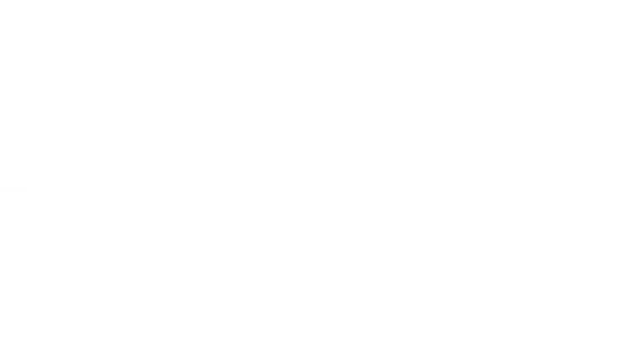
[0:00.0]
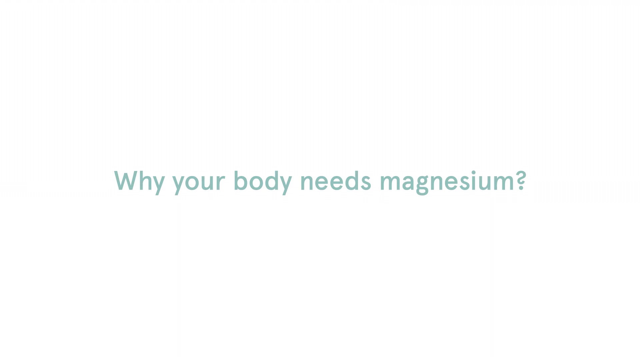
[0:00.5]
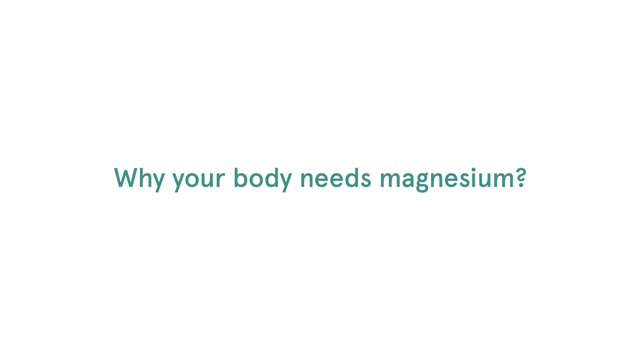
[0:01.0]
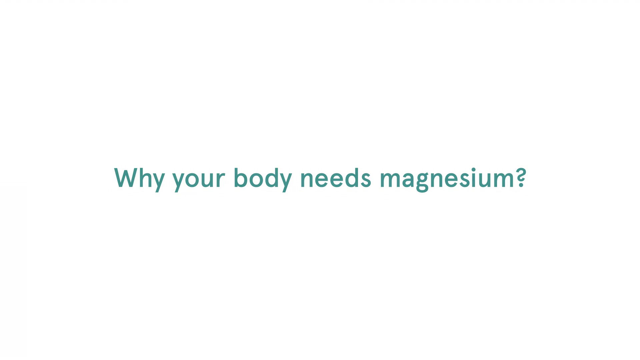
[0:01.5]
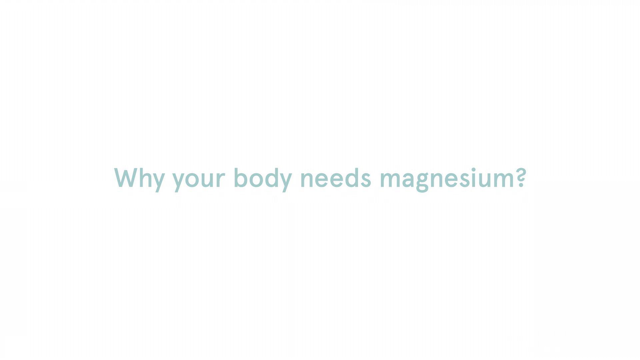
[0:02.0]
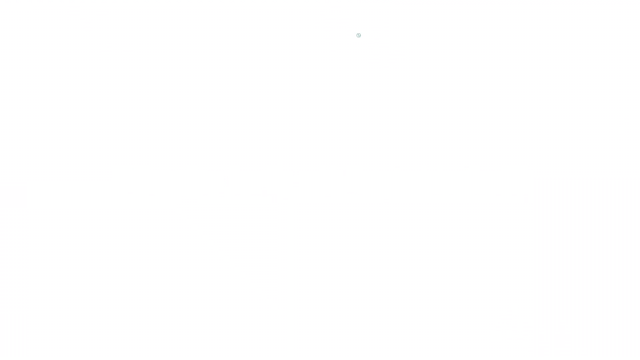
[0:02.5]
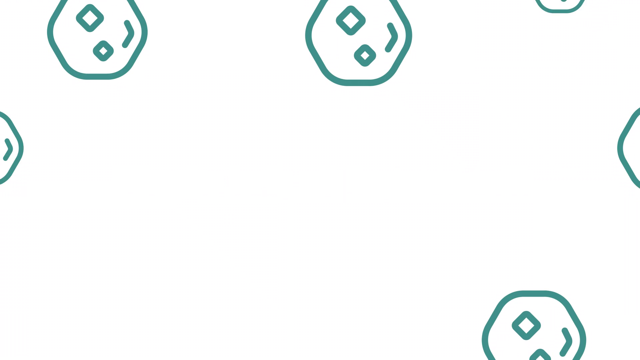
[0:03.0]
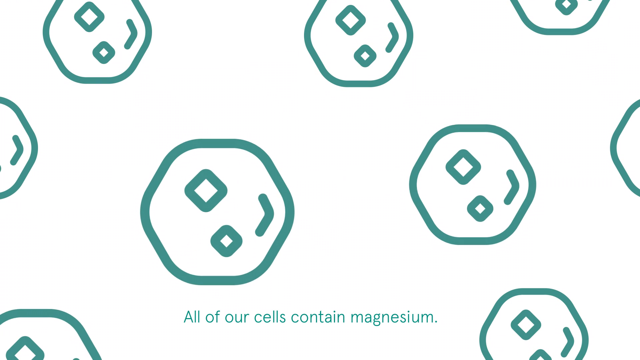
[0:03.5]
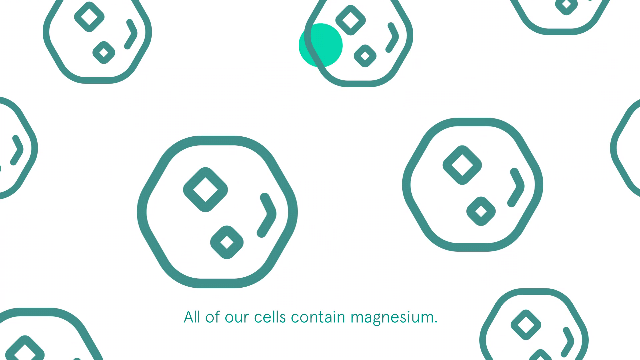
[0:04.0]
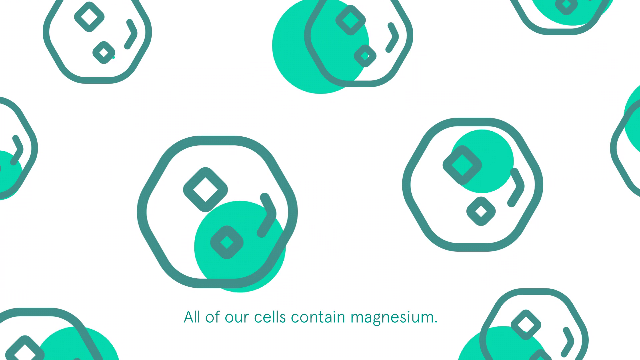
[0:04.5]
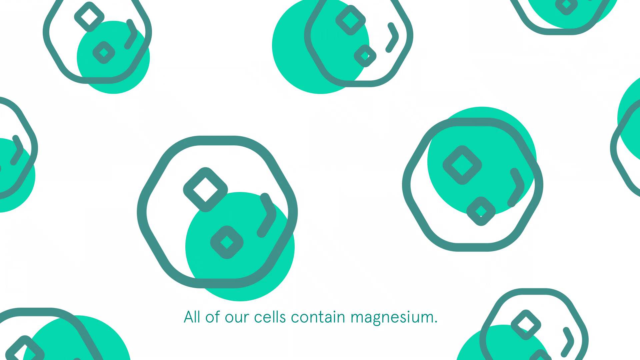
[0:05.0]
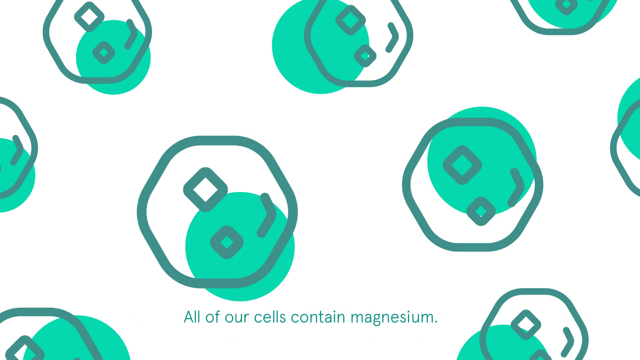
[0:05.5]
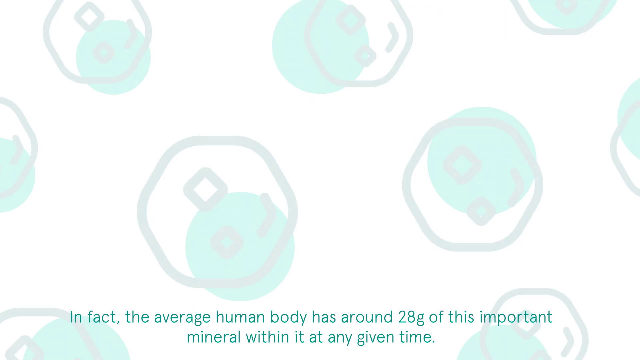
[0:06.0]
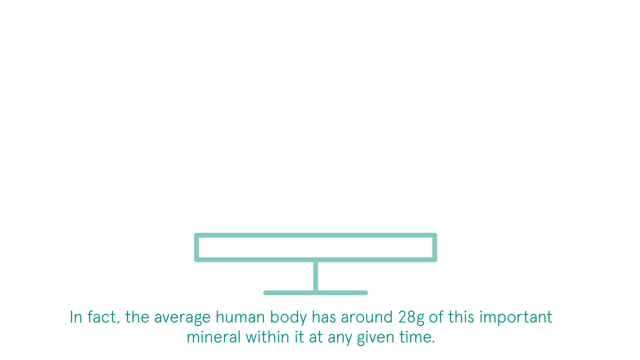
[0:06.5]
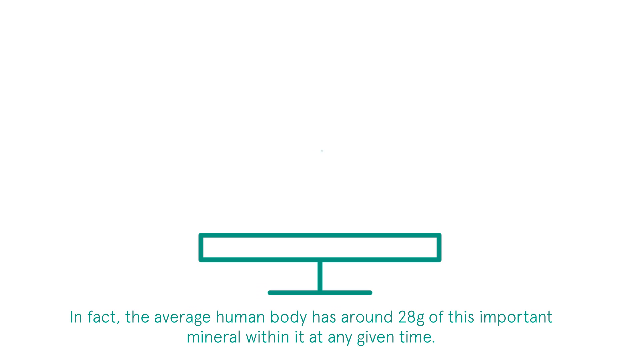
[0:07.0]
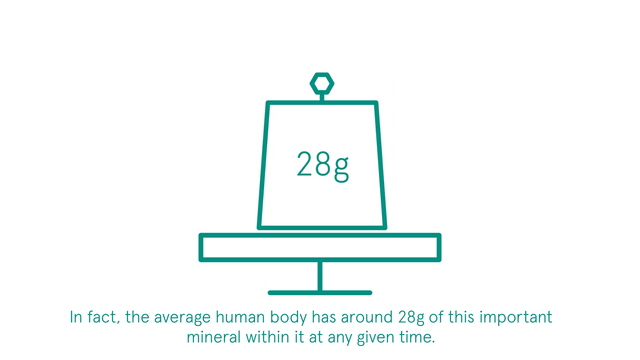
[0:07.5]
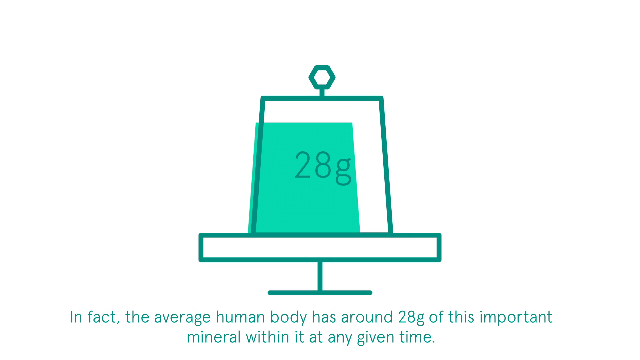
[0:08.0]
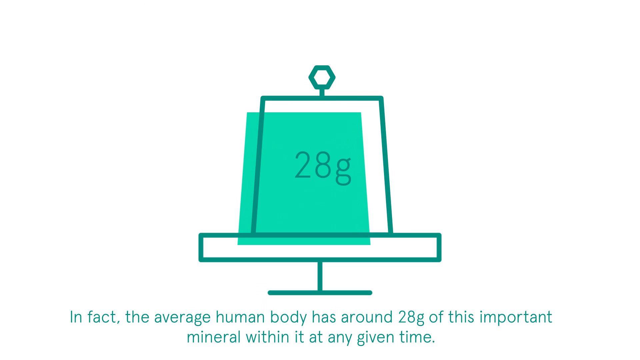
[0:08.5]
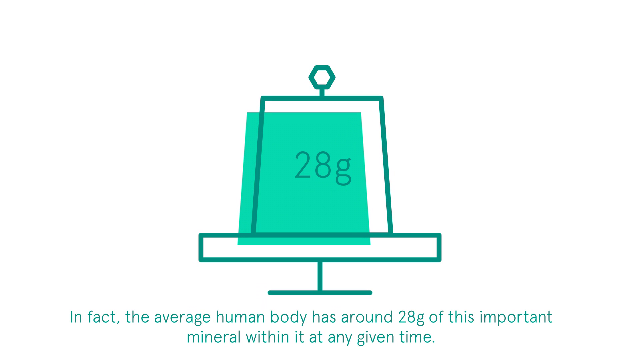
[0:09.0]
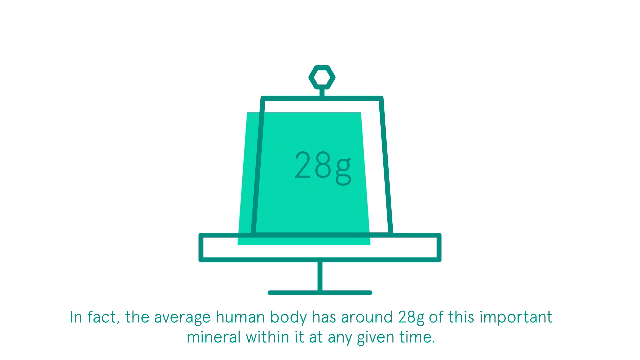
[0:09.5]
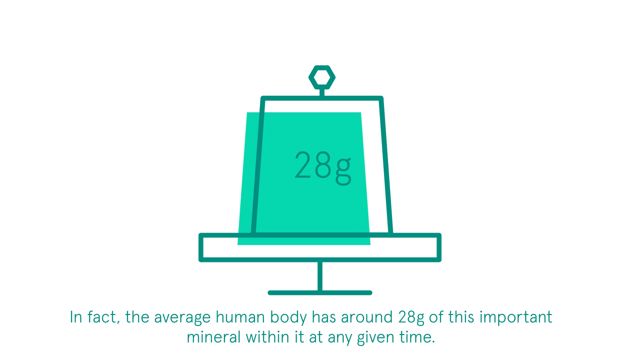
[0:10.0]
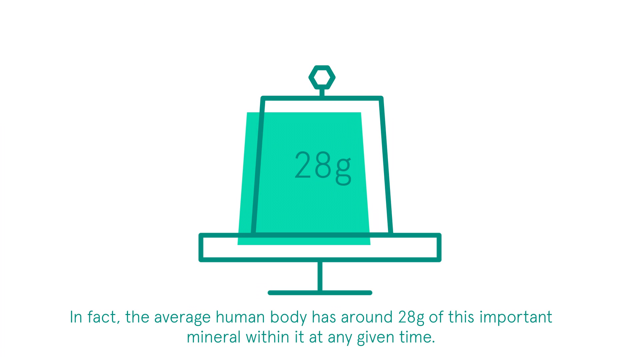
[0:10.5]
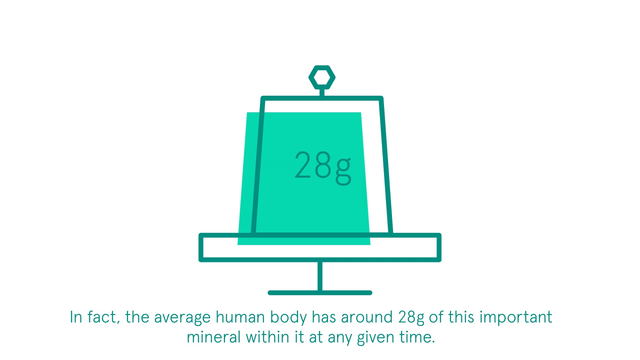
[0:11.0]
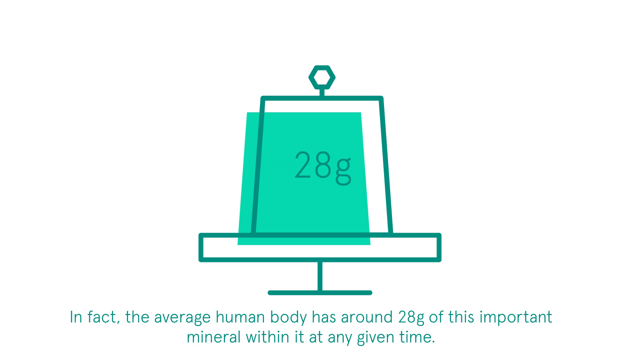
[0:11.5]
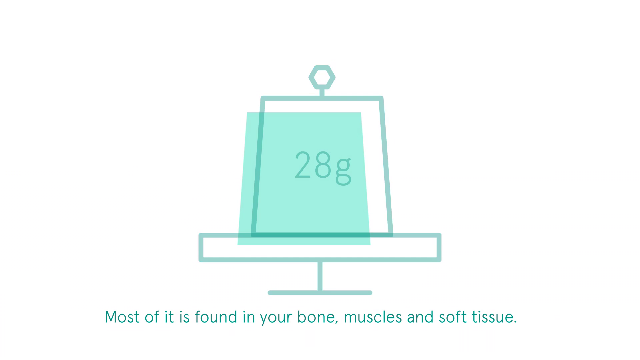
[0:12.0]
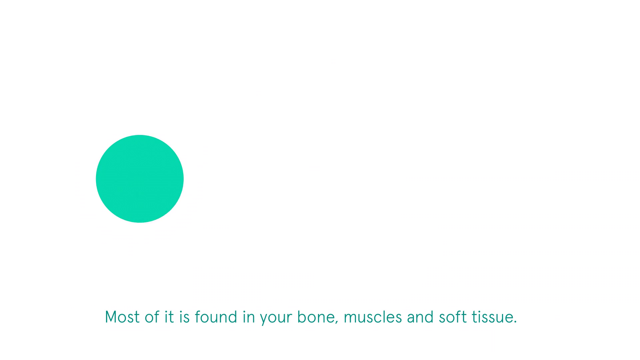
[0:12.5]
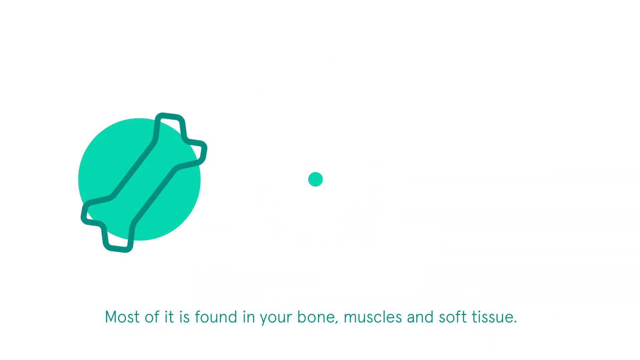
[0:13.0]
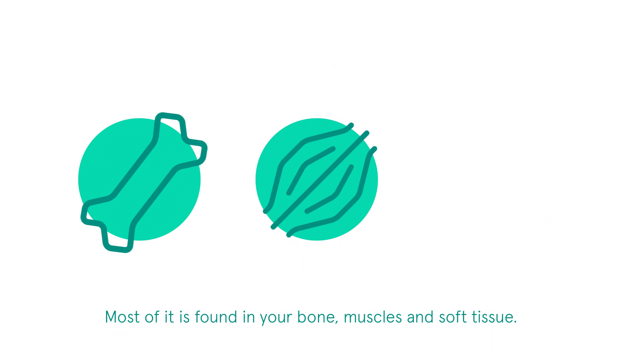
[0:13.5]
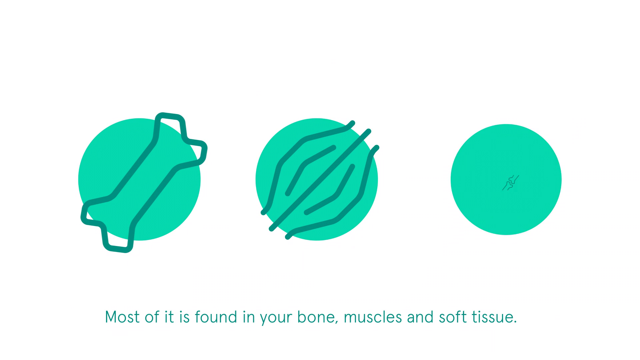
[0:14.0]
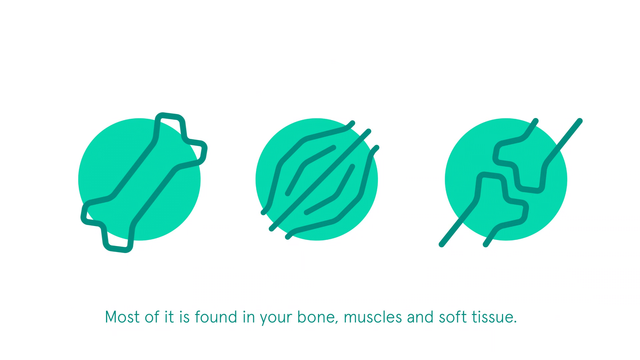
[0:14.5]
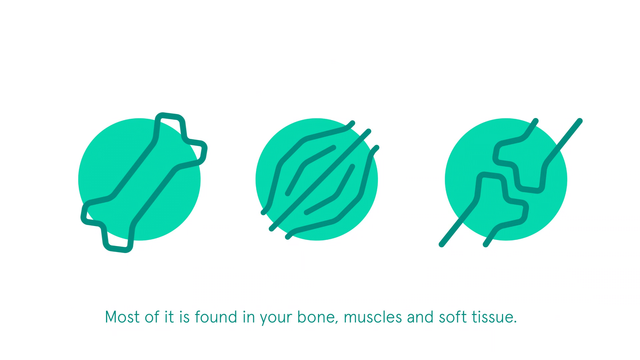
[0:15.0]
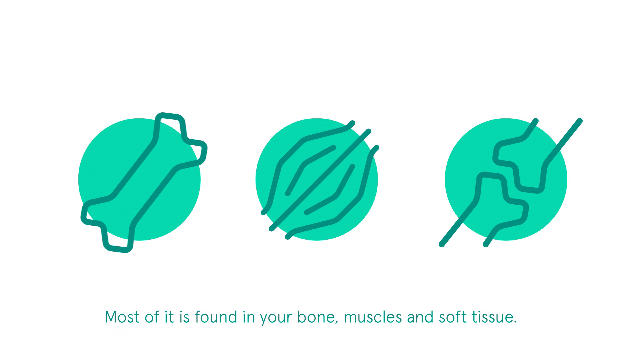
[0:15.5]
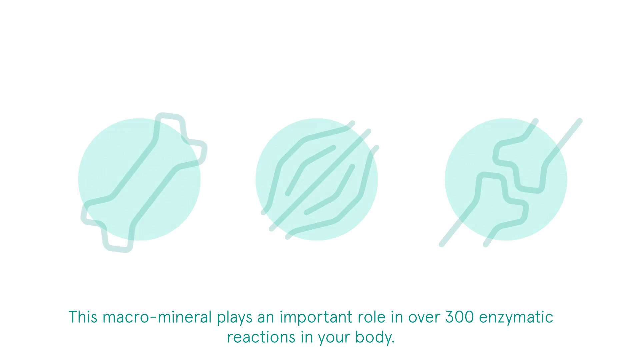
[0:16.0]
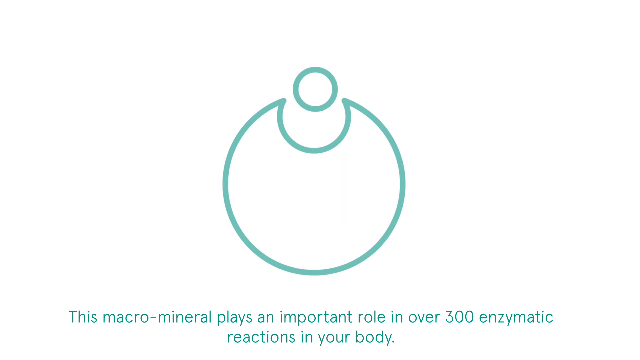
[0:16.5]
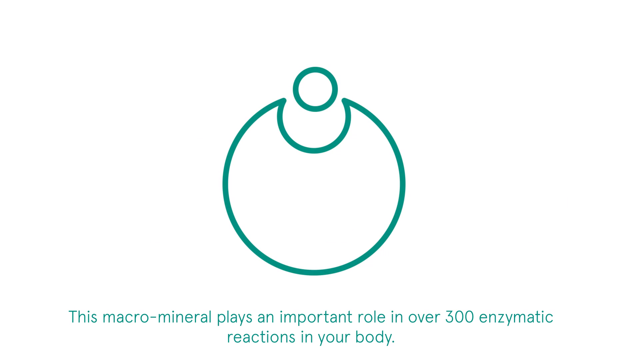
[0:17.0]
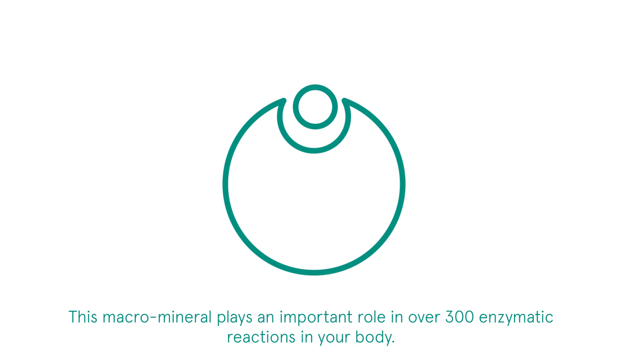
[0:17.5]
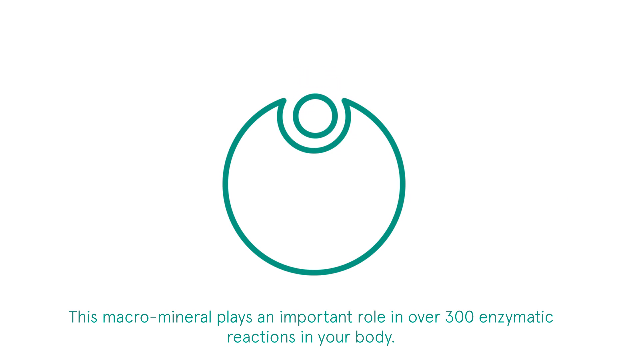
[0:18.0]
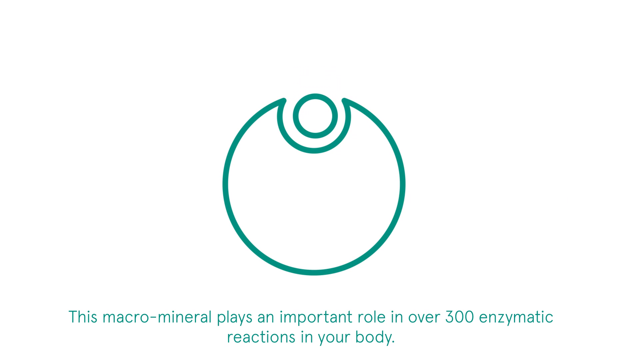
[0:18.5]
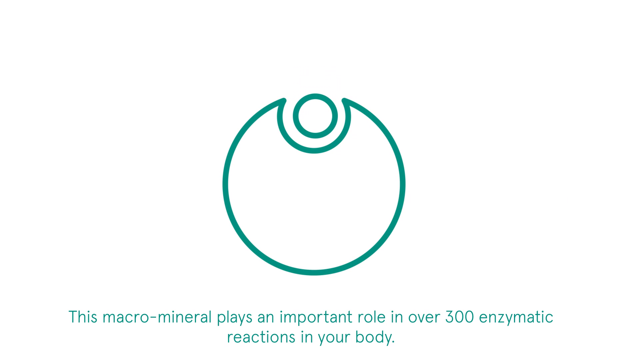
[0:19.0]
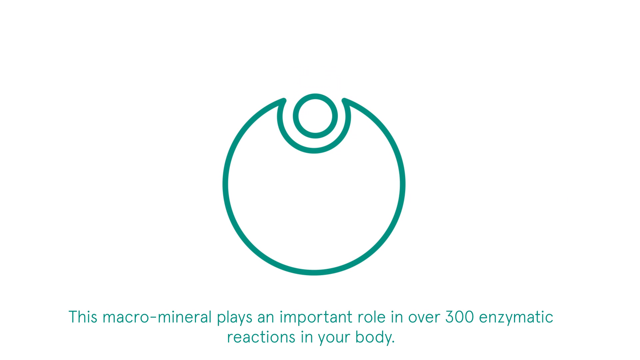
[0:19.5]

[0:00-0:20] A health video opens on a white slide with teal-blue text reading "why your body needs magnesium?" Next comes a group of teal-colored shapes, possibly cells or perhaps meant to represent magnesium, with text at the bottom: "all of our cells contain magnesium. In fact, the average human body has around 28 grams of this important mineral within it at any given time." A drawing of a balancing scale appears in the same teal. Three hand-drawn pictures follow. The first, on the left, is the outline of a bone. The next has a green circle on top, then another green circle, and is probably a vein or artery bulging out. The third also has the green circle and shows two bones, or maybe synapses firing. Text at the bottom reads "most of it is found in your bone, muscles, and soft tissue. This macro mineral plays an important role in over 300". At the very end, another picture briefly appears.